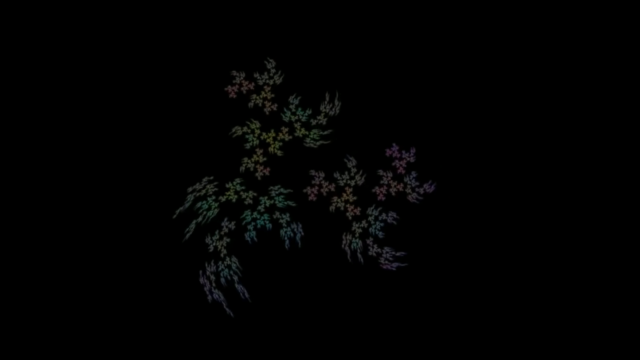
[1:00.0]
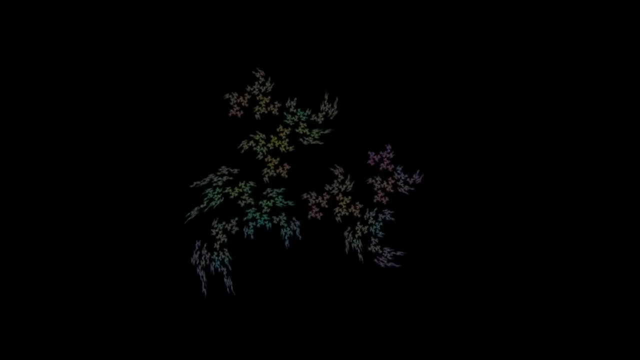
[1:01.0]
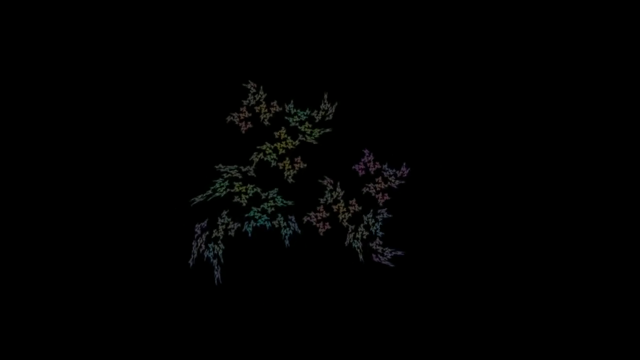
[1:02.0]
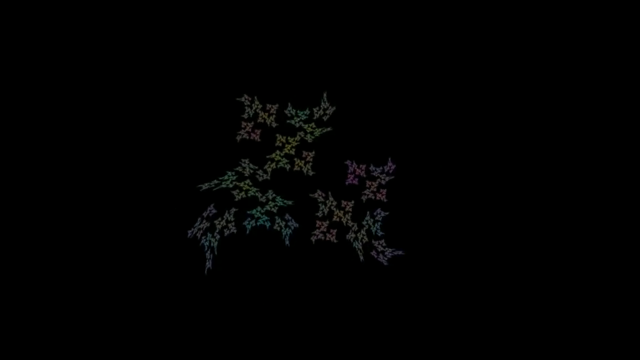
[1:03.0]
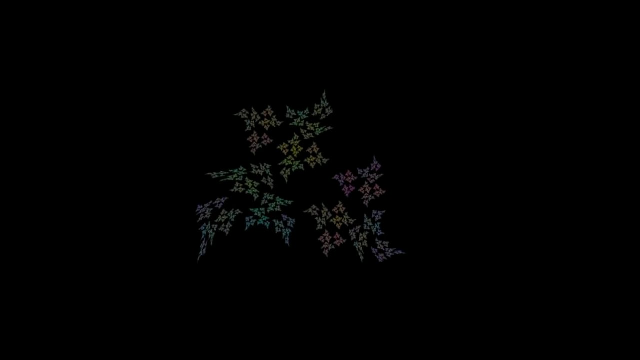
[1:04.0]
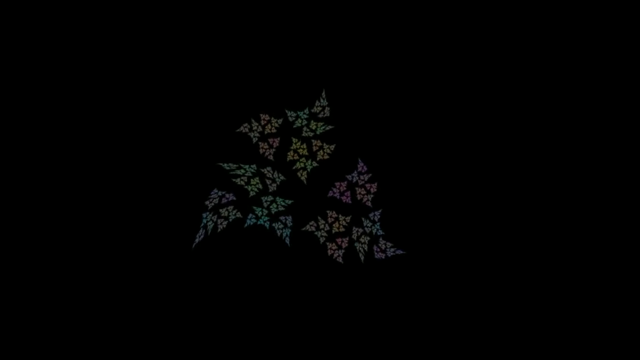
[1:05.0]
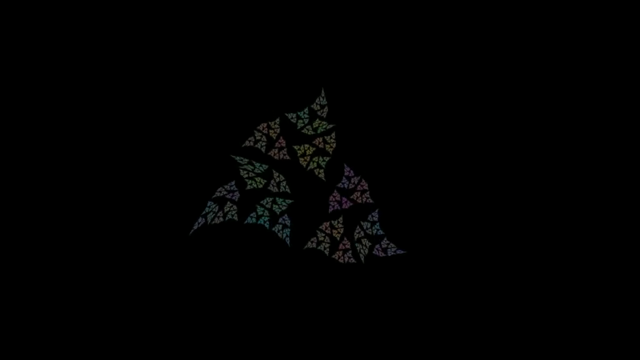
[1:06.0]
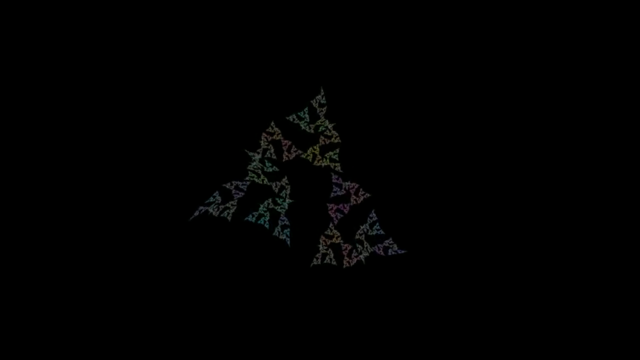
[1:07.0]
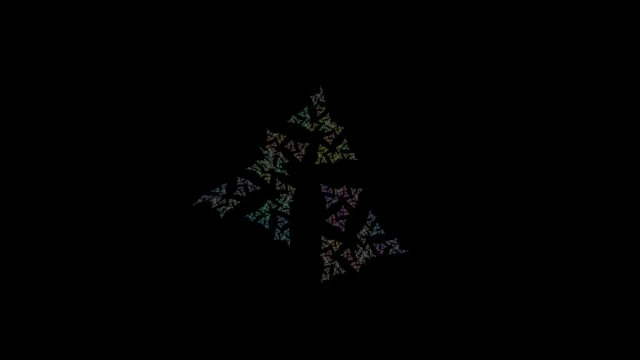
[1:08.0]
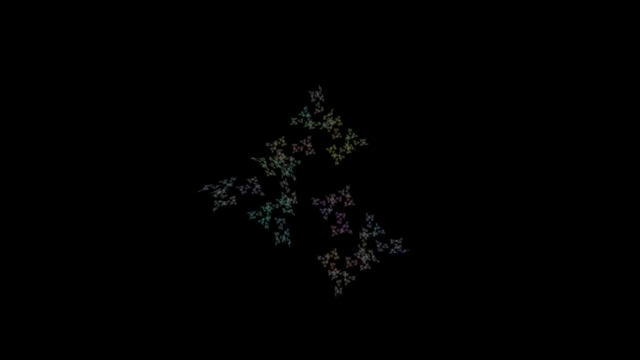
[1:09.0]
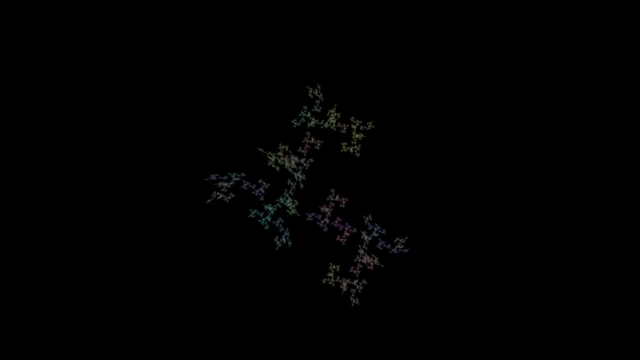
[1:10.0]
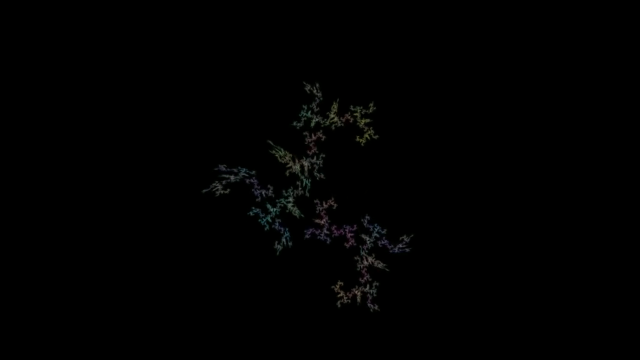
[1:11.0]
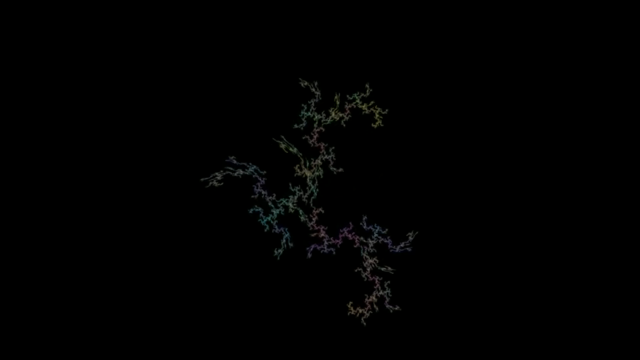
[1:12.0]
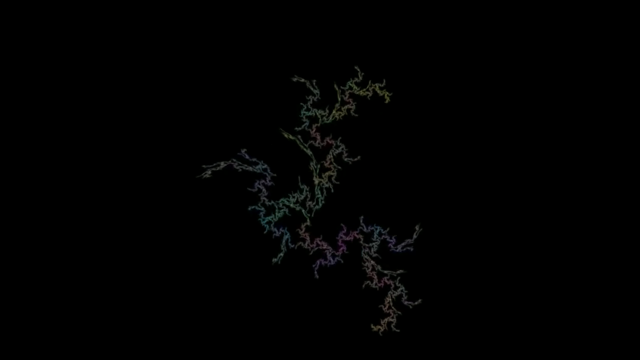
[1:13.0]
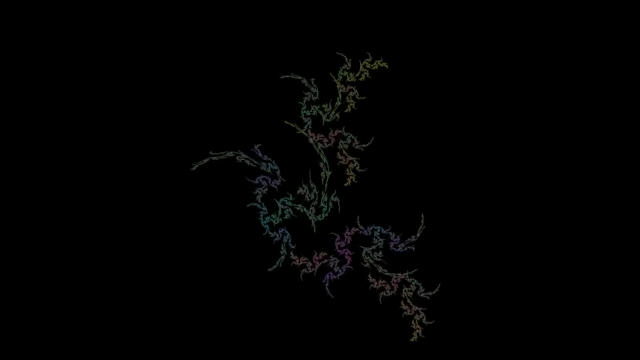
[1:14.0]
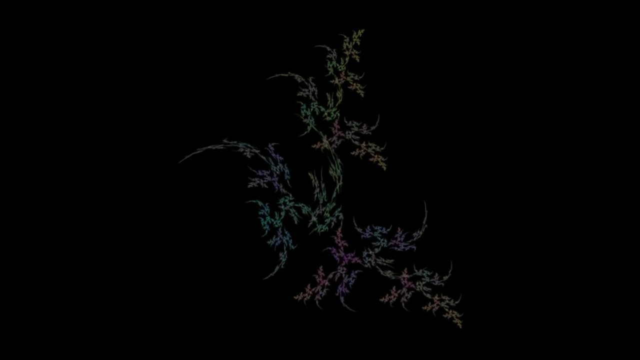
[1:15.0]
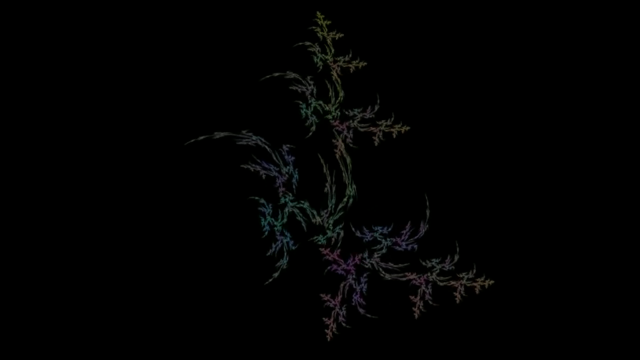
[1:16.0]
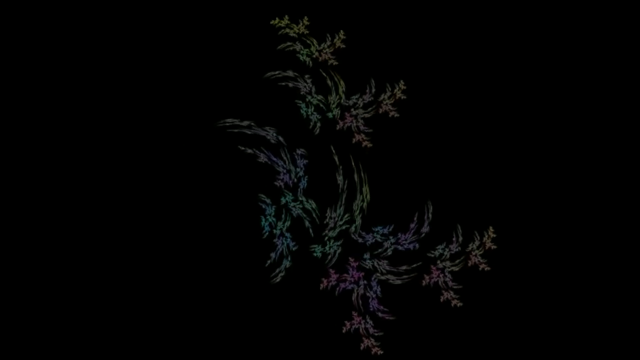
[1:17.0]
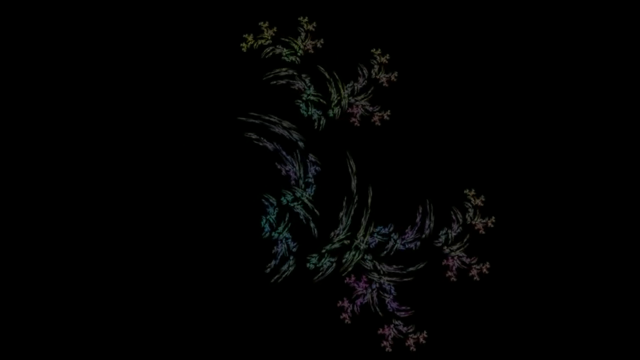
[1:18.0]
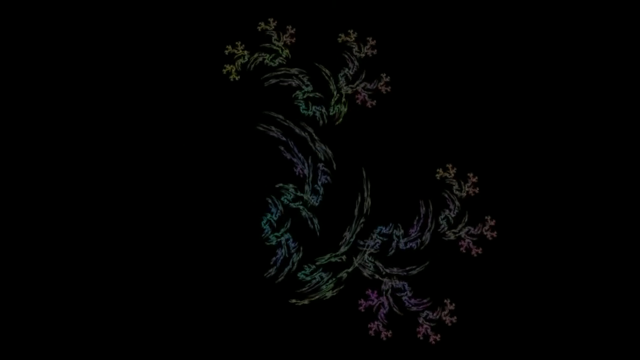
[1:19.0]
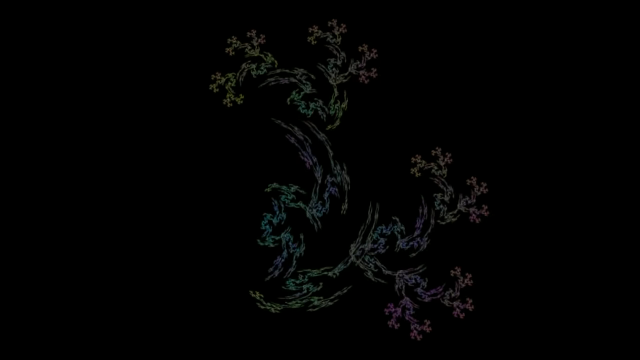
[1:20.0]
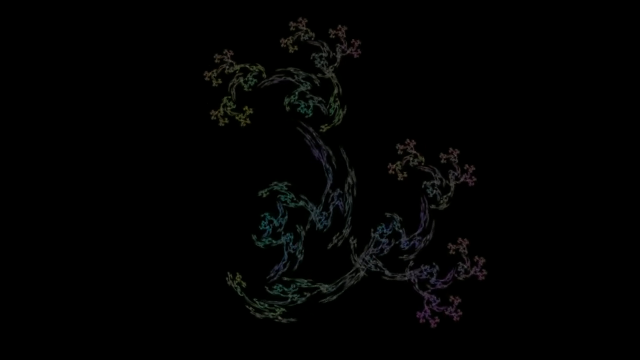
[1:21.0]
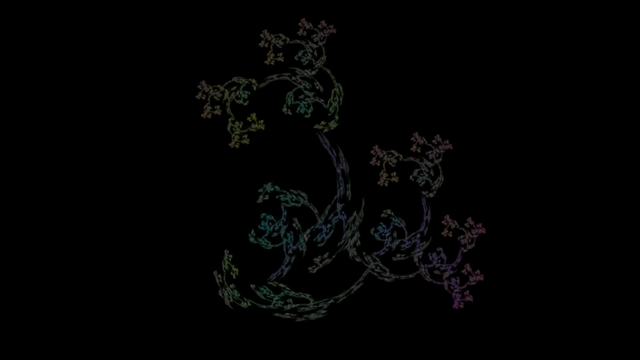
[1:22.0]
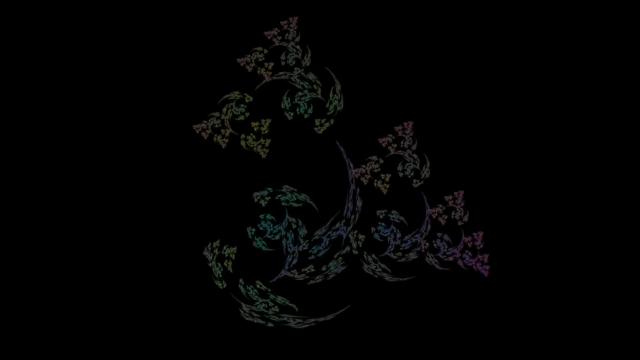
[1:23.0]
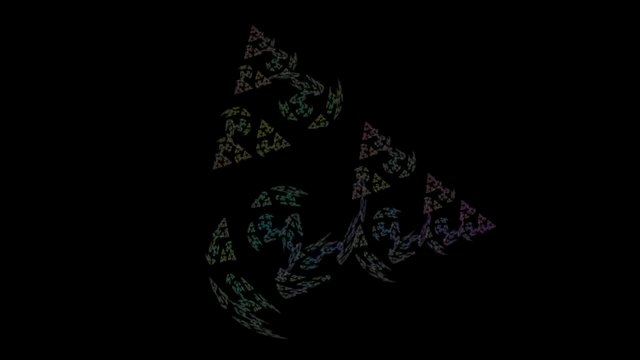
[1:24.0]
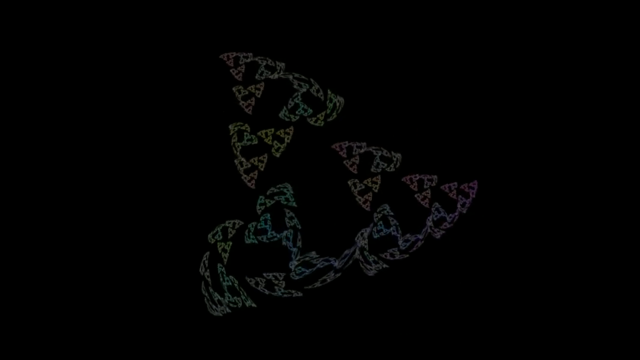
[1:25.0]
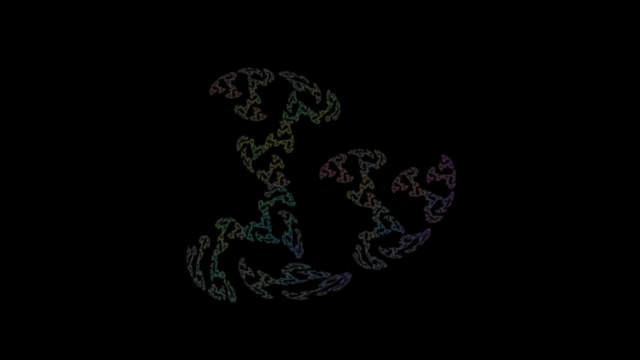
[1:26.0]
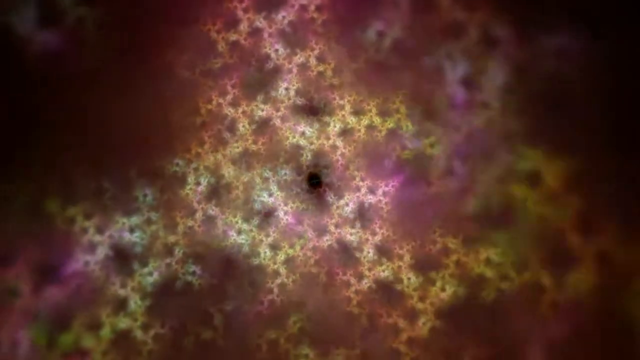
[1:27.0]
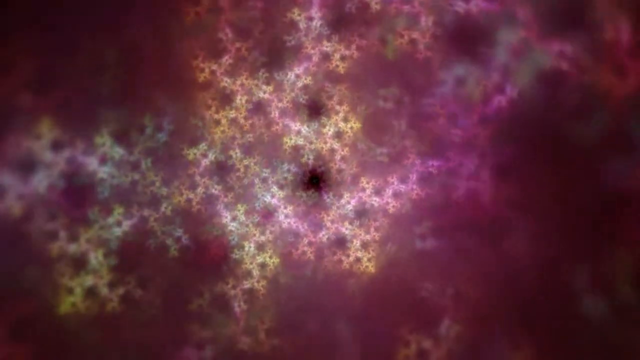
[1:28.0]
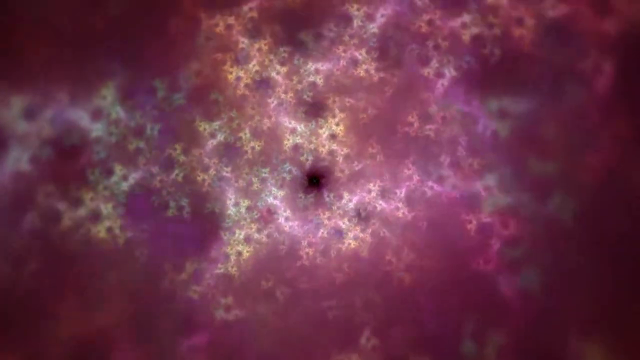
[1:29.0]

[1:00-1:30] On a black background are what look to be potentially flowers or dots in pastel colours: green, yellow and purples. They swirl, somewhat change shape, get small and circulate into smaller images of triangles. There is a big triangle, and the image in the middle of each one has its own little triangles. Multiple ones swirl and get smaller as they shrink into themselves, continue to change shape, fade almost to nothing and kind of come back with more swirls in a kaleidoscope pattern. They get really big, as if they are leaves stretching out across the black background, in pastel greens, blues, purples, yellows and pinks. They continue to swirl along the black background and return to the triangle pattern. The screen then switches to a brighter, psychedelic-style cyclone of a kaleidoscope, with purples and yellows beginning to take over the screen. An empty circle remains in the middle, more toward the center point of the screen, as if it is the starting point that everything swirls around.